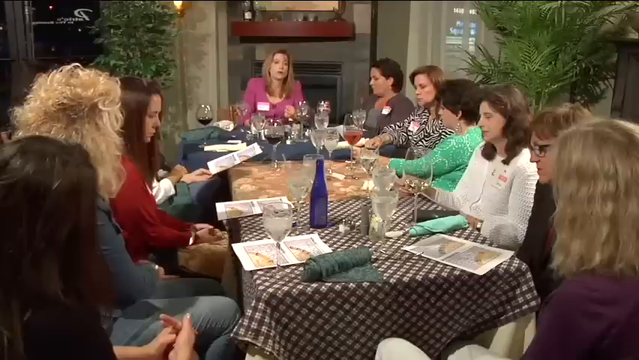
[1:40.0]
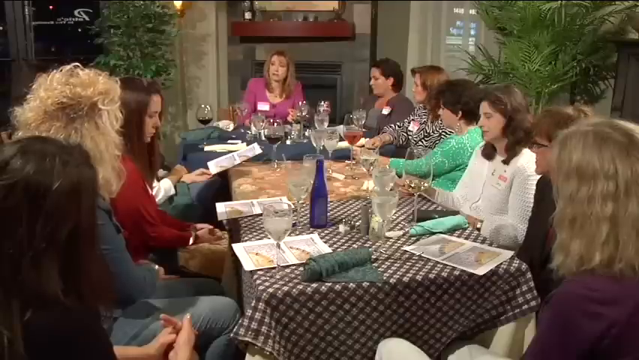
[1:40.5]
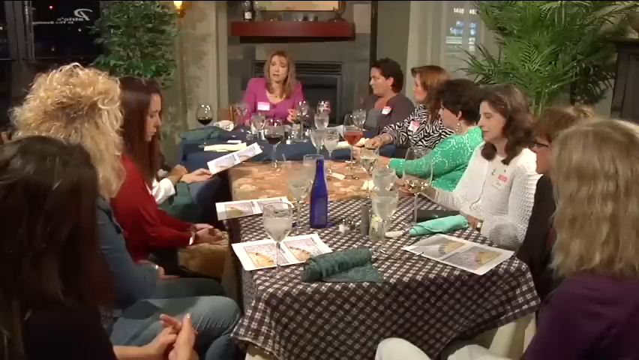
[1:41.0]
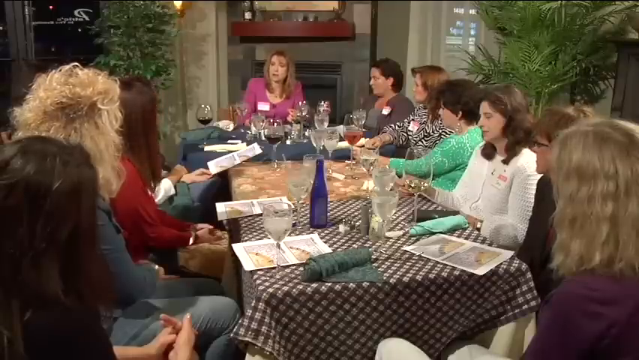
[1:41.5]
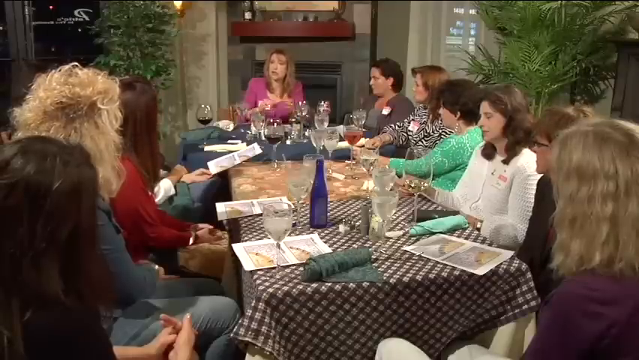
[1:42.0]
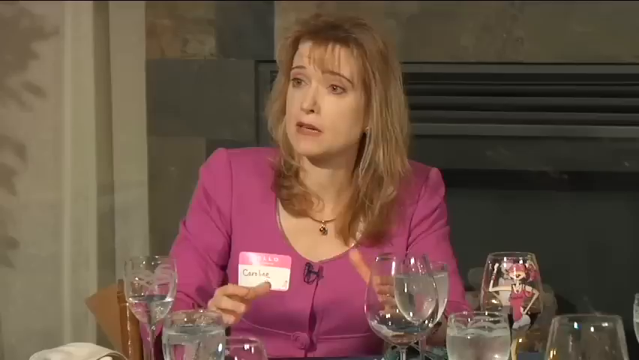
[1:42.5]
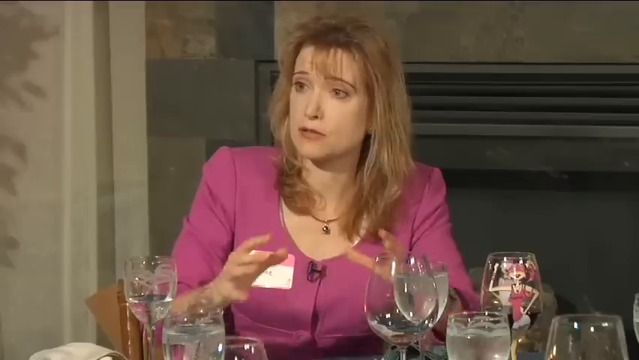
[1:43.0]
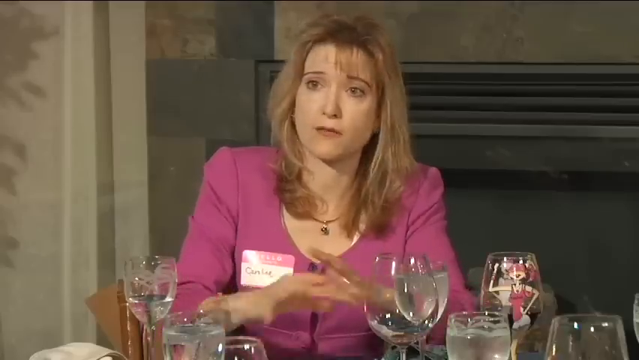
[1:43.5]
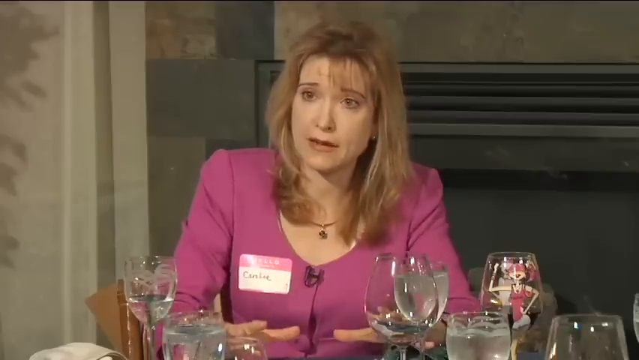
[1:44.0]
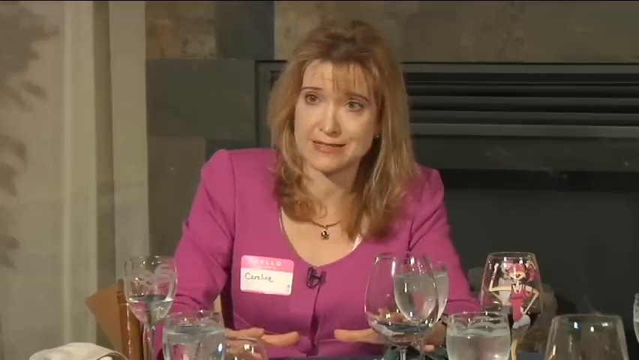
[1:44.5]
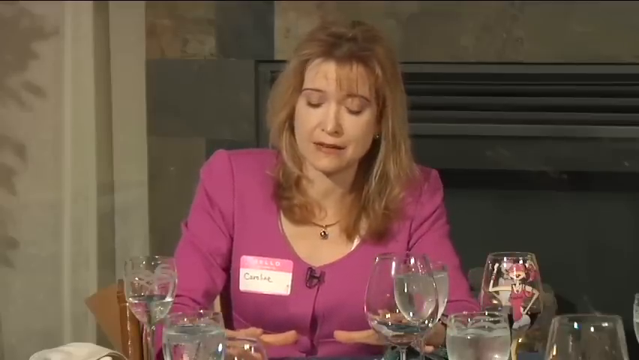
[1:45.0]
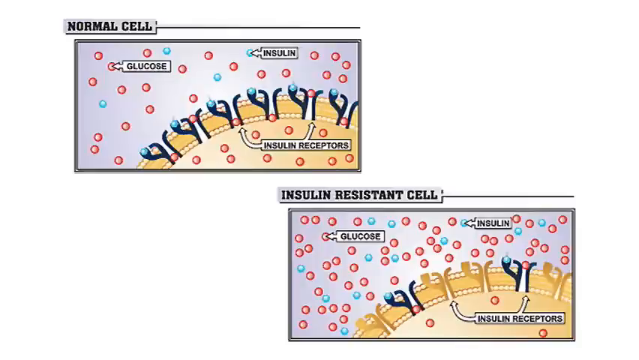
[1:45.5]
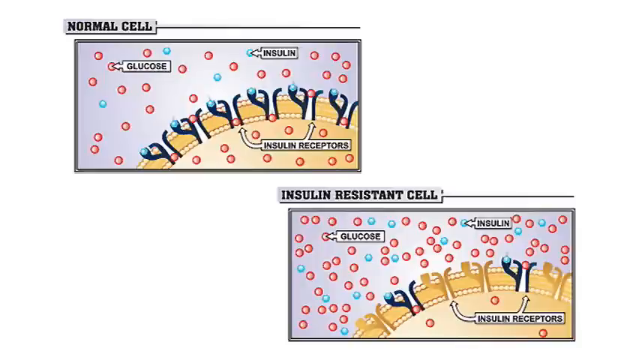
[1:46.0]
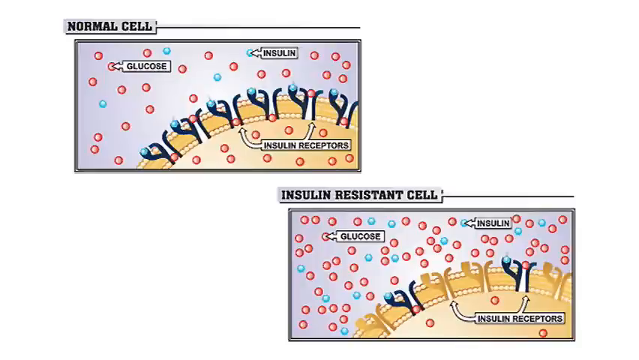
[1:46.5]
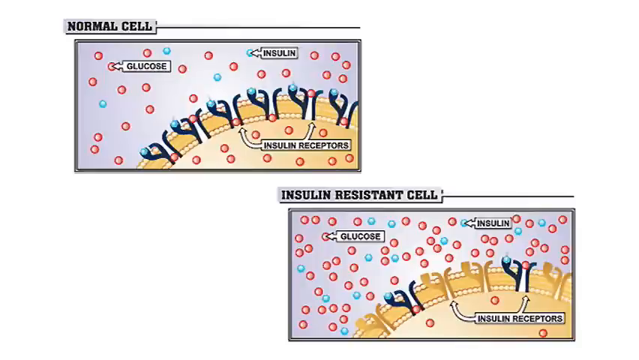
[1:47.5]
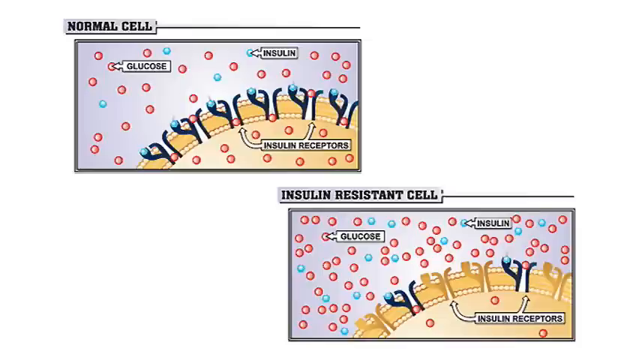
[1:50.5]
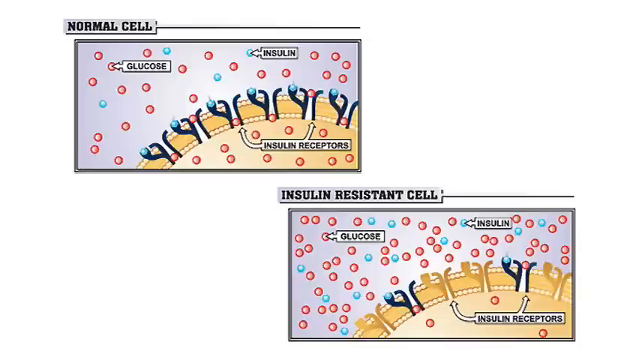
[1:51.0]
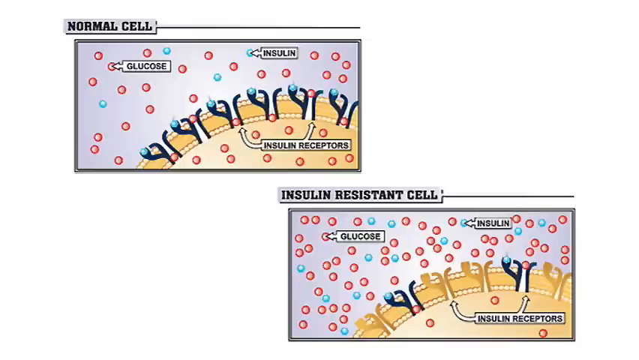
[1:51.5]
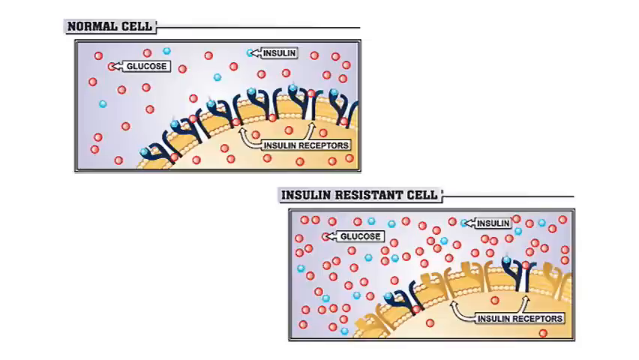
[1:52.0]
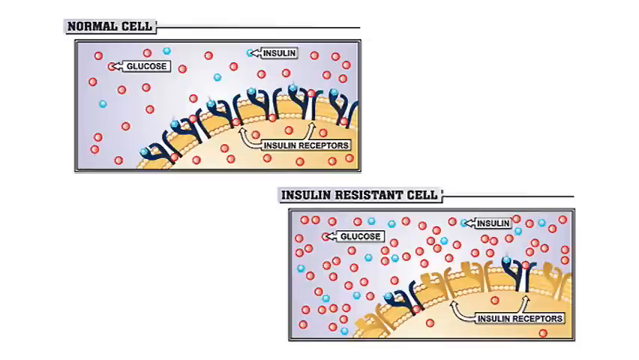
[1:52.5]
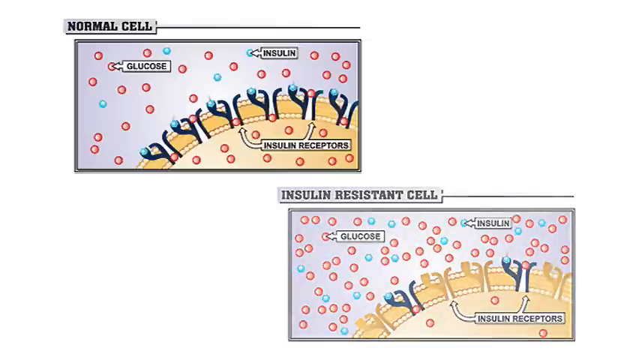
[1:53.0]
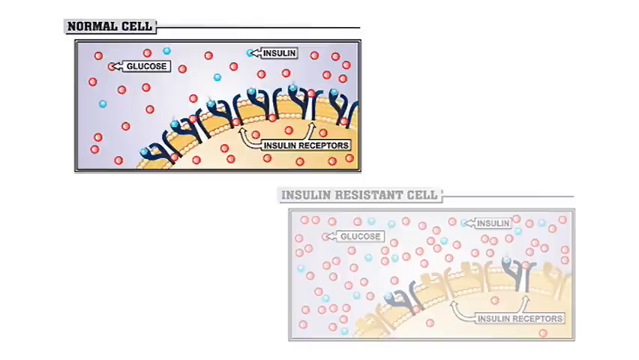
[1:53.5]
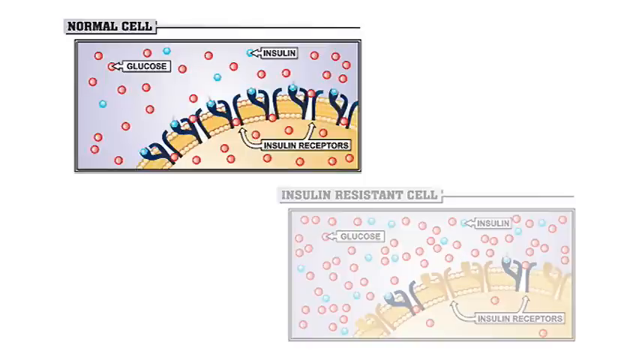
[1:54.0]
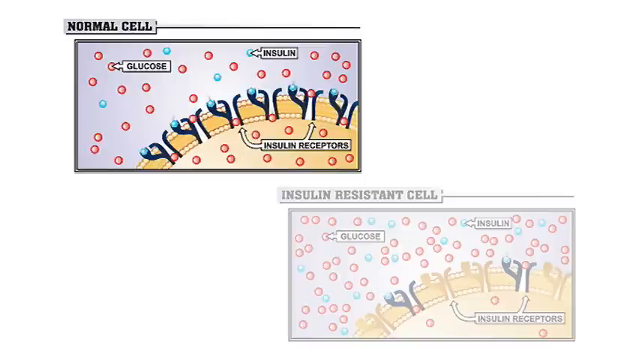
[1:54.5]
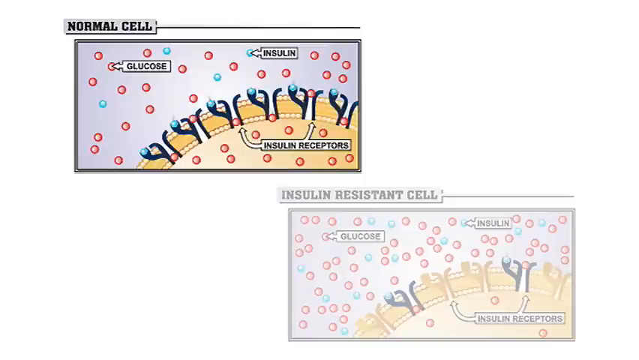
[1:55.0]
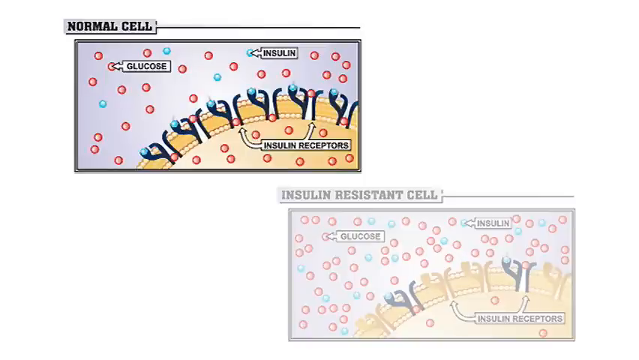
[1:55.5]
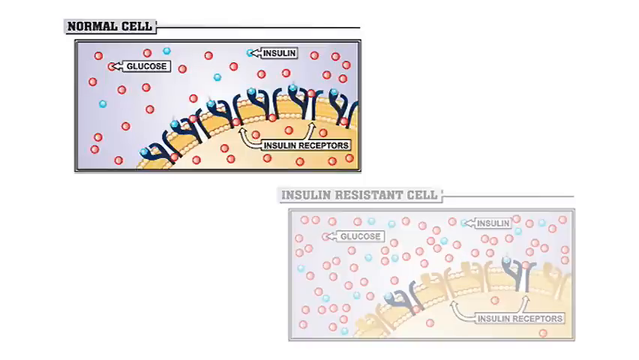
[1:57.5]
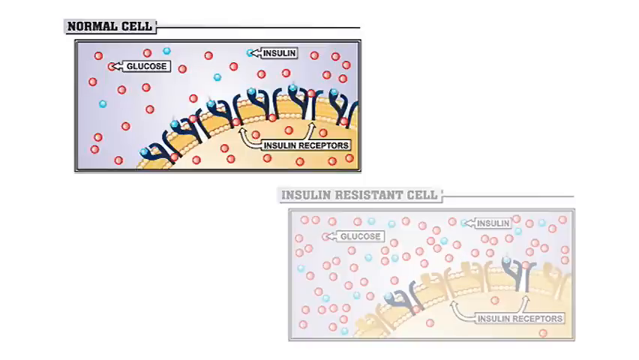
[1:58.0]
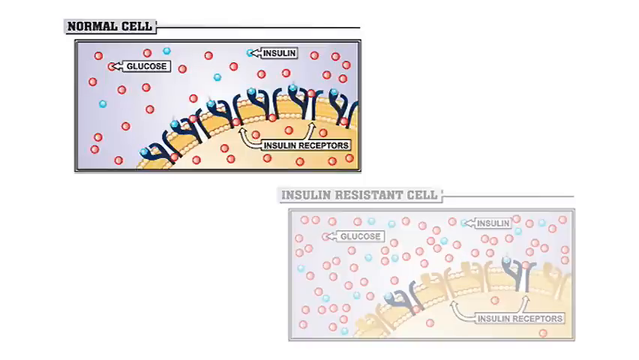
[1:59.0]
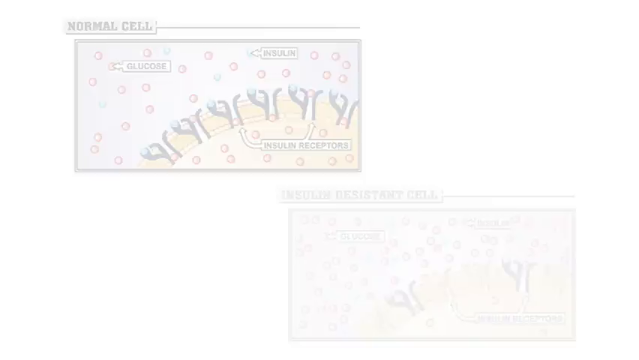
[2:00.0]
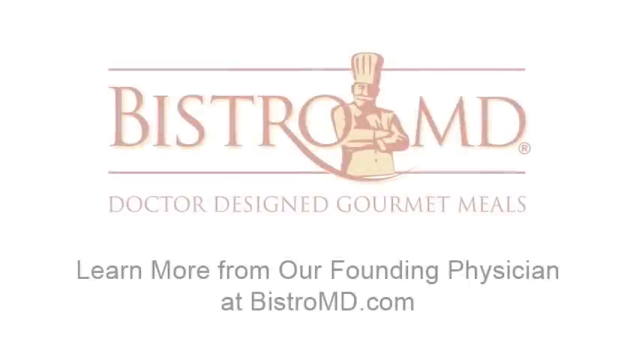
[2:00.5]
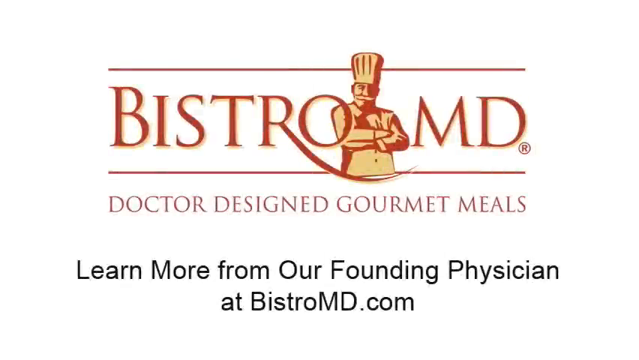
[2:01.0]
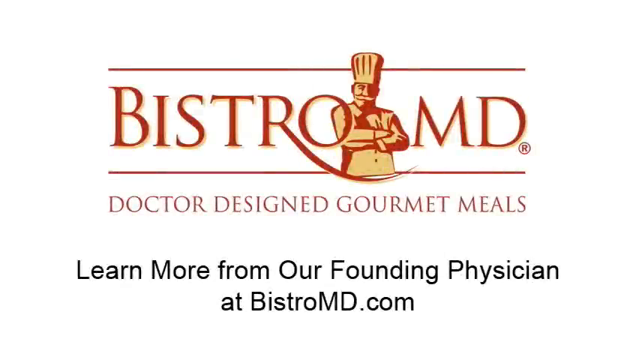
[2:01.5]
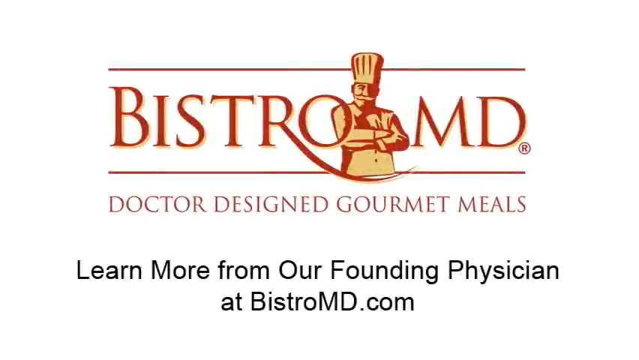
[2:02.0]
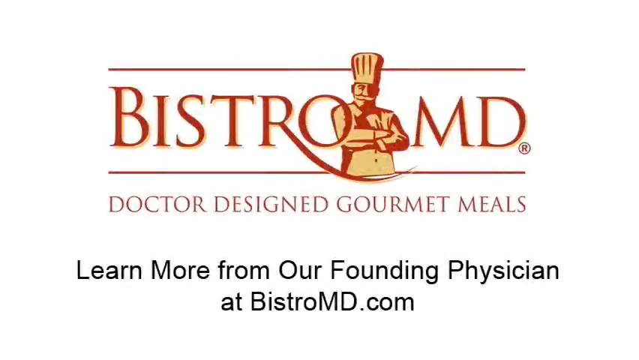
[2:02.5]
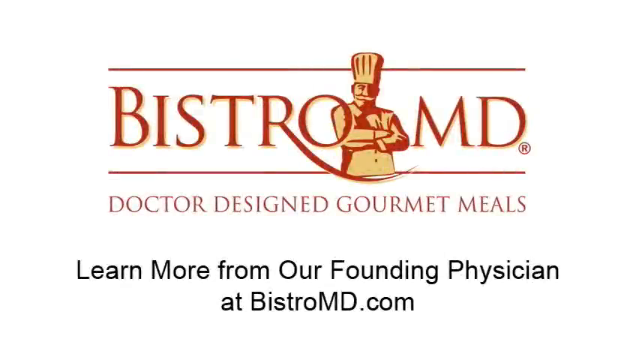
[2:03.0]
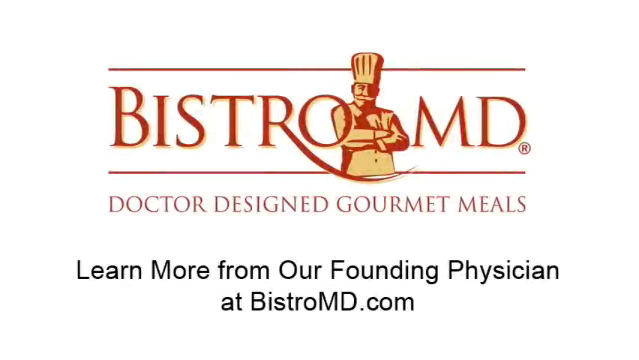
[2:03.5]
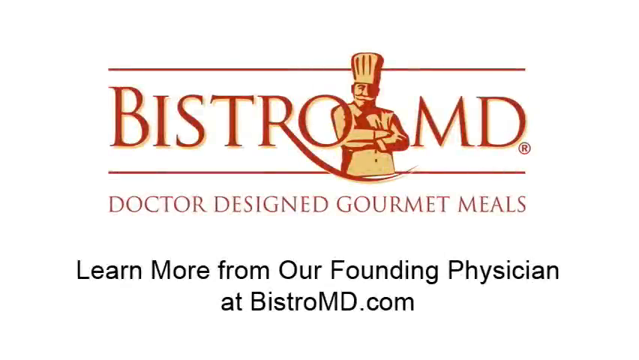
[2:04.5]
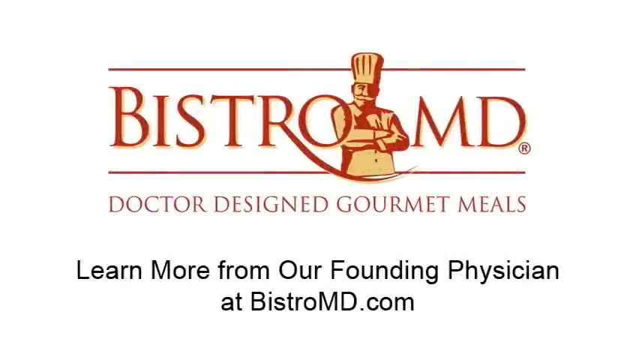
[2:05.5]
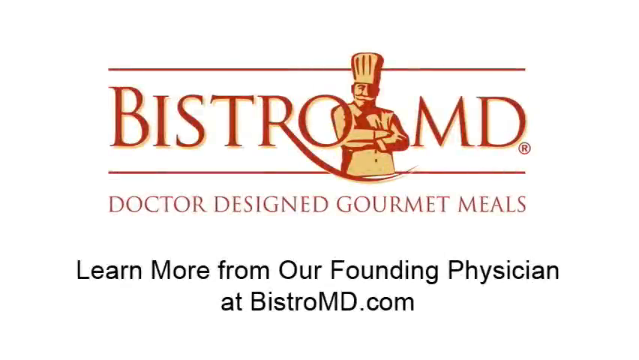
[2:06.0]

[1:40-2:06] A group of women sits around what looks like a restaurant-style table, having some type of meeting. A woman at the head of the table, wearing a dark pink top with a sticker name tag on her shirt, is talking while the other women listen. The camera zooms in on her as she kind of motions with her hands. The video then transitions to a screen with two banners: the upper left one is titled "normal cell" and the lower right one "insulin resistant cell". The content in the middle of each banner is exactly the same: an arrow pointing to glucose, a red dot, an arrow pointing to insulin, a blue dot, and the insulin receptors below, a graphic of the insulin receptors of a blood cell. The video ends with the company's logo, BistroMD, and the words "doctor designed gourmet meals".